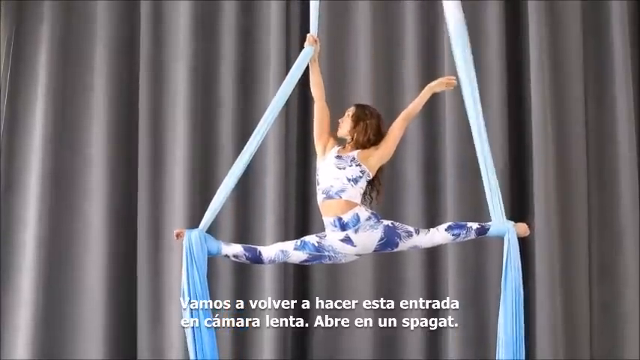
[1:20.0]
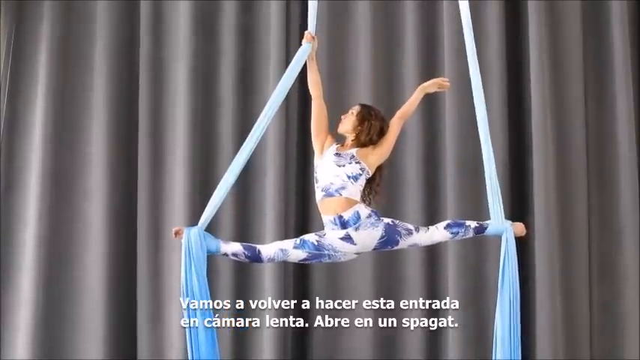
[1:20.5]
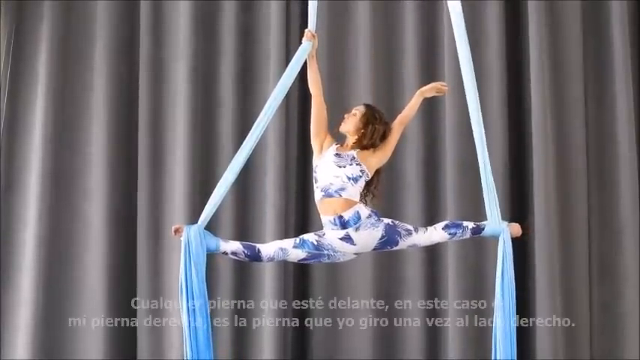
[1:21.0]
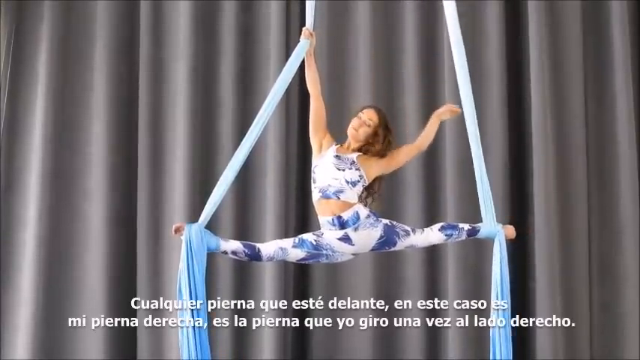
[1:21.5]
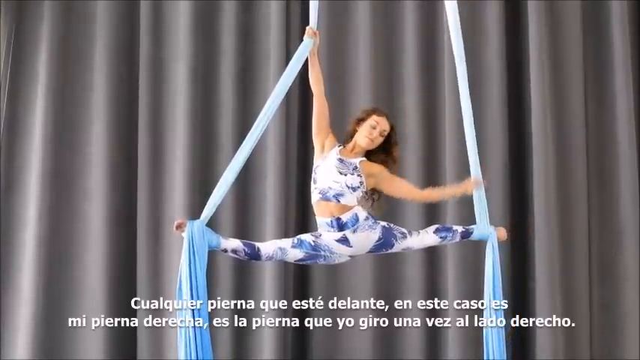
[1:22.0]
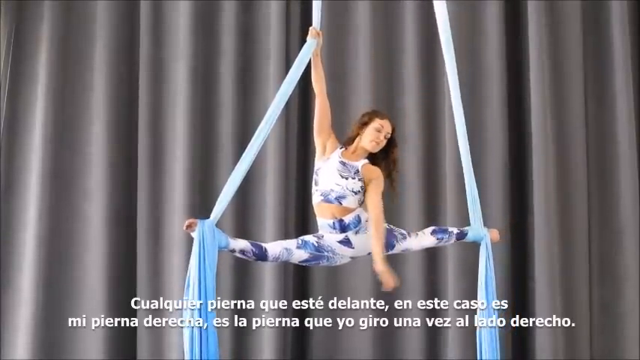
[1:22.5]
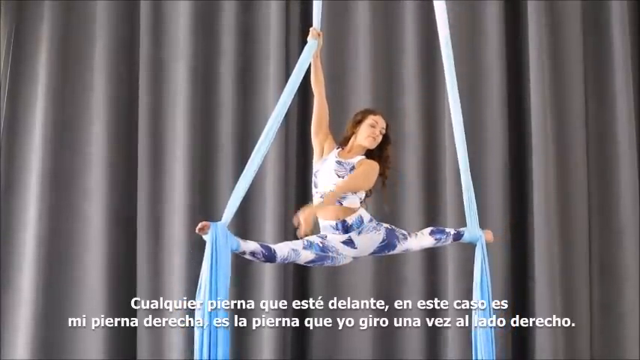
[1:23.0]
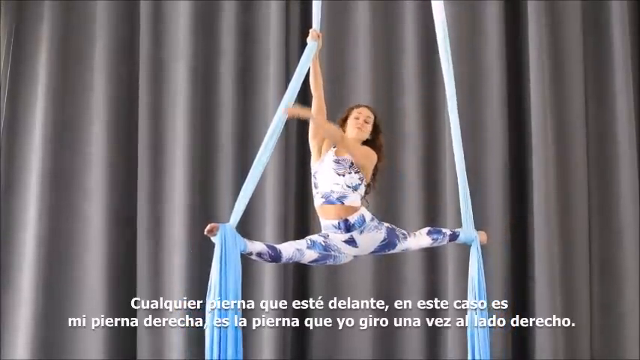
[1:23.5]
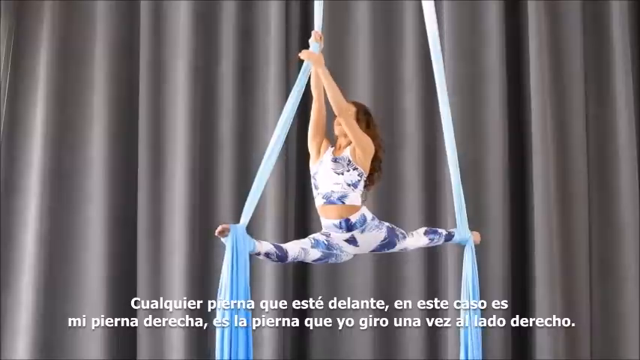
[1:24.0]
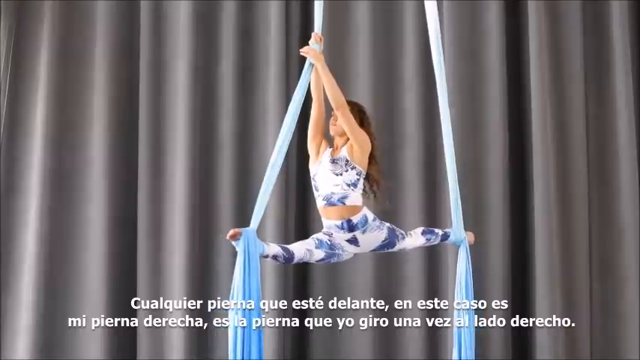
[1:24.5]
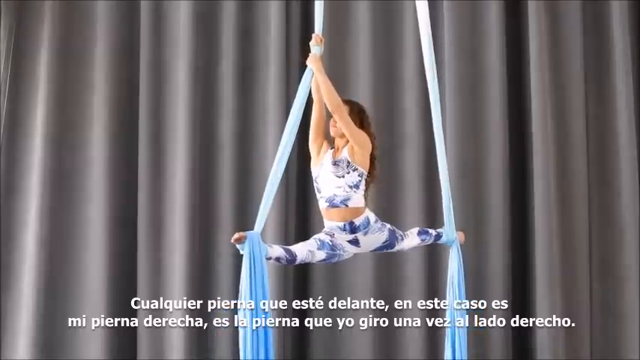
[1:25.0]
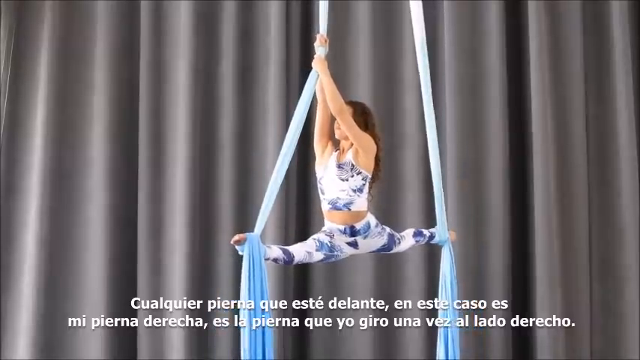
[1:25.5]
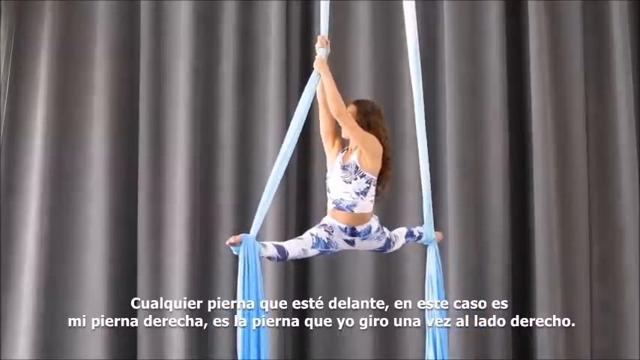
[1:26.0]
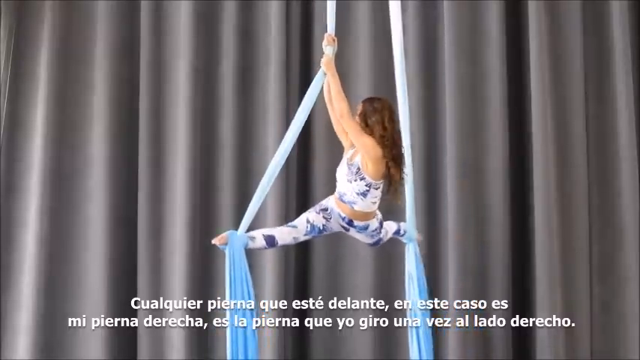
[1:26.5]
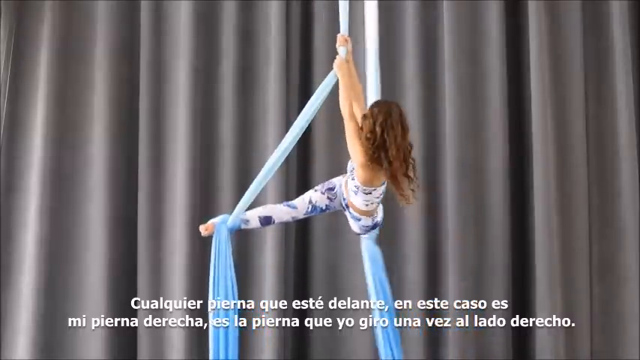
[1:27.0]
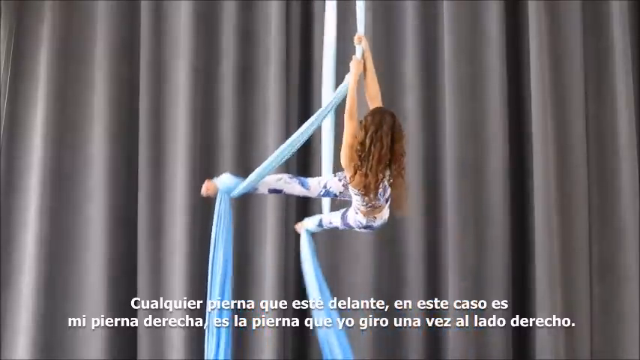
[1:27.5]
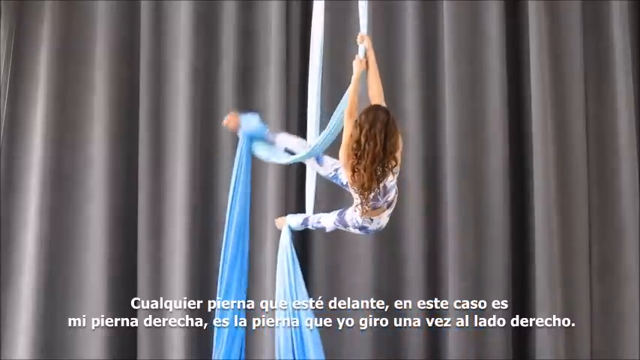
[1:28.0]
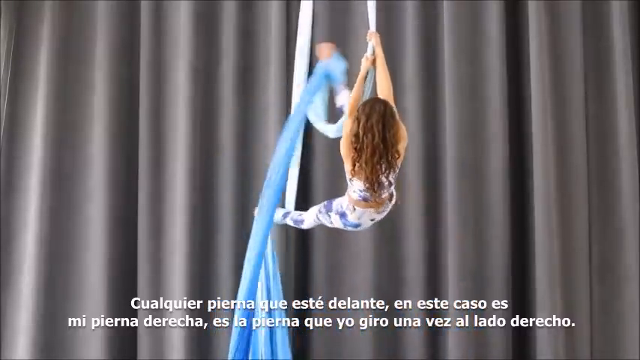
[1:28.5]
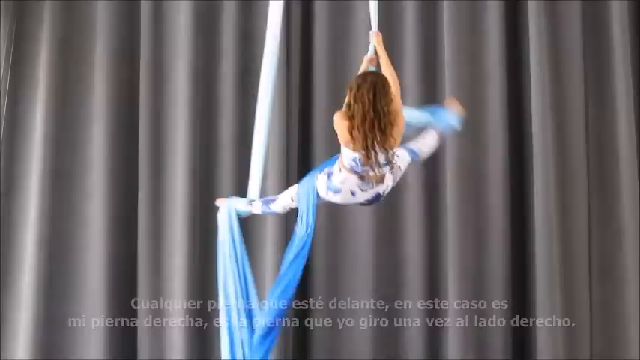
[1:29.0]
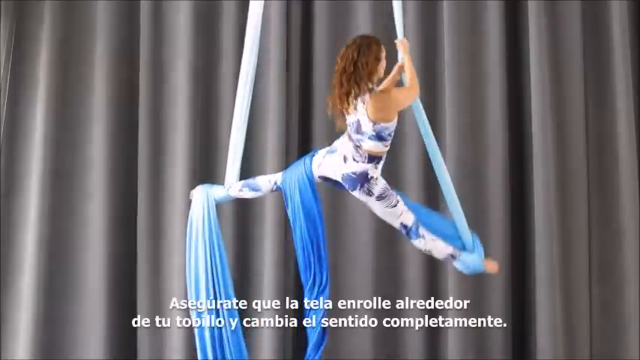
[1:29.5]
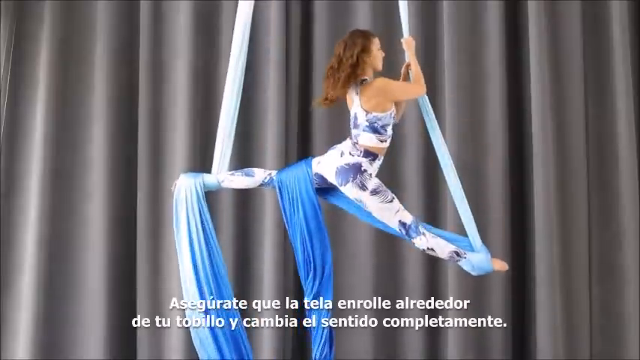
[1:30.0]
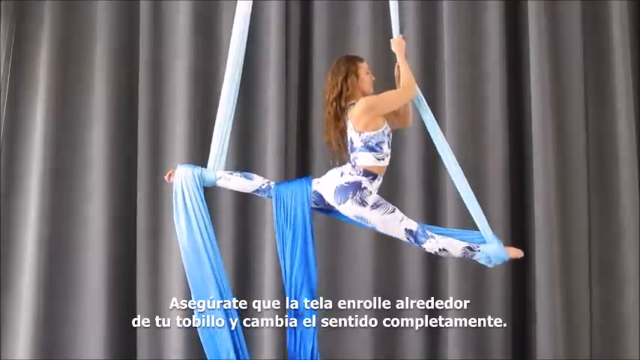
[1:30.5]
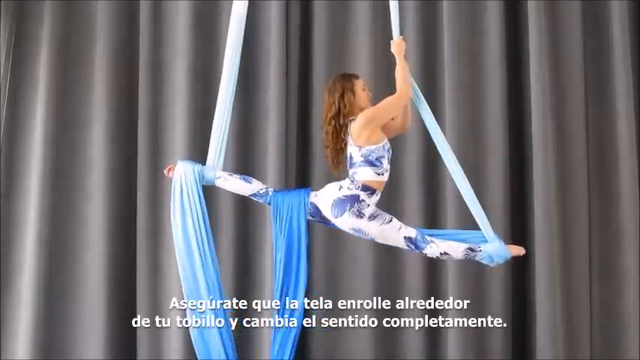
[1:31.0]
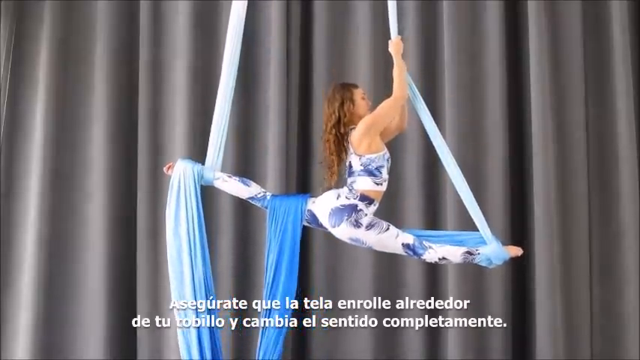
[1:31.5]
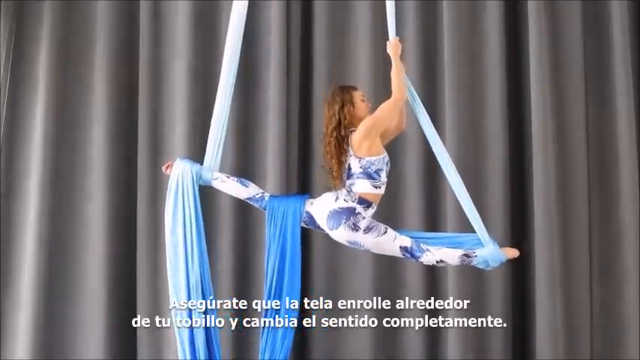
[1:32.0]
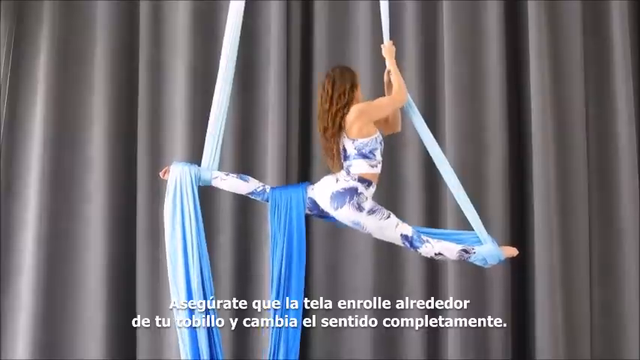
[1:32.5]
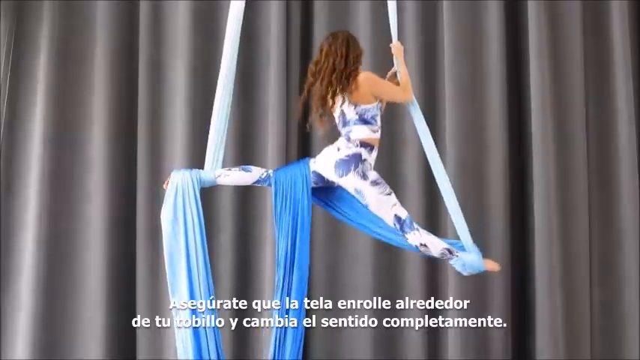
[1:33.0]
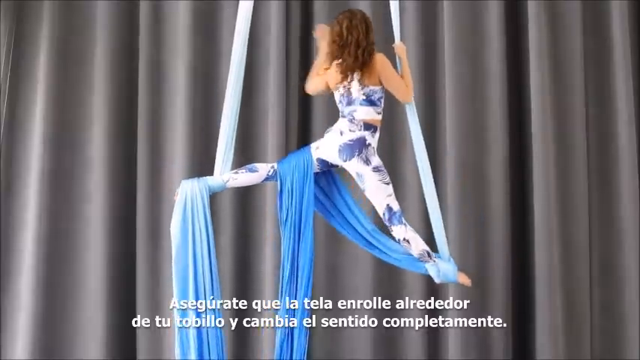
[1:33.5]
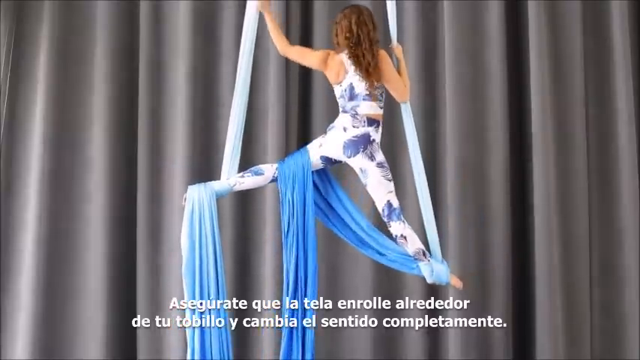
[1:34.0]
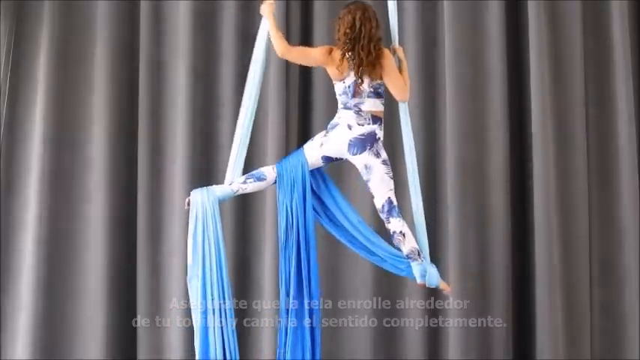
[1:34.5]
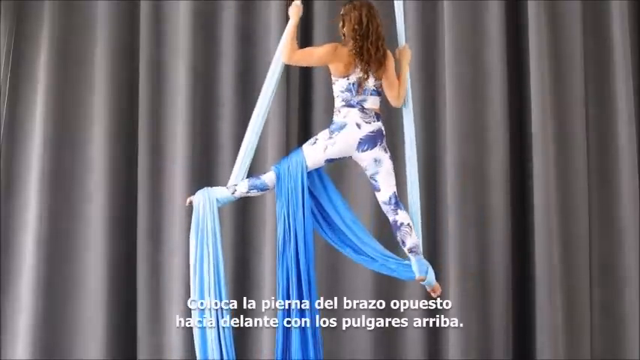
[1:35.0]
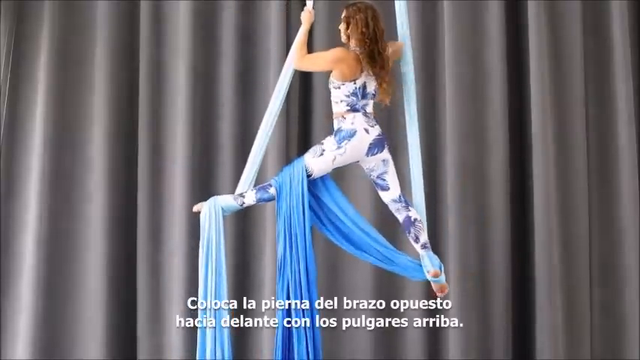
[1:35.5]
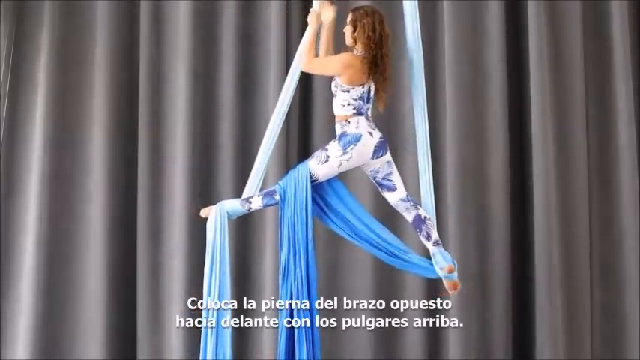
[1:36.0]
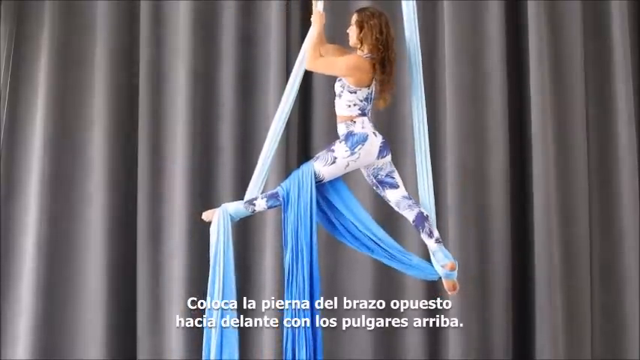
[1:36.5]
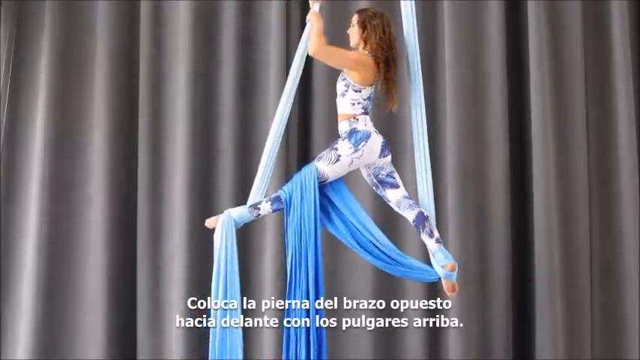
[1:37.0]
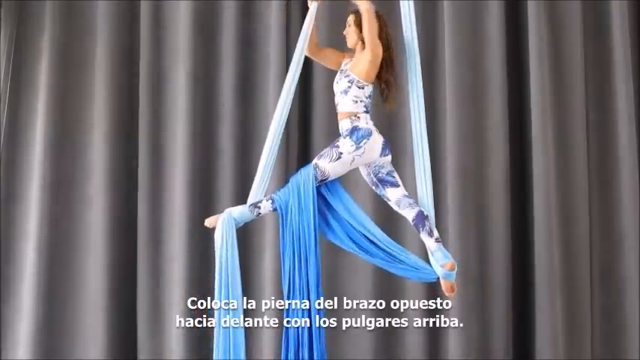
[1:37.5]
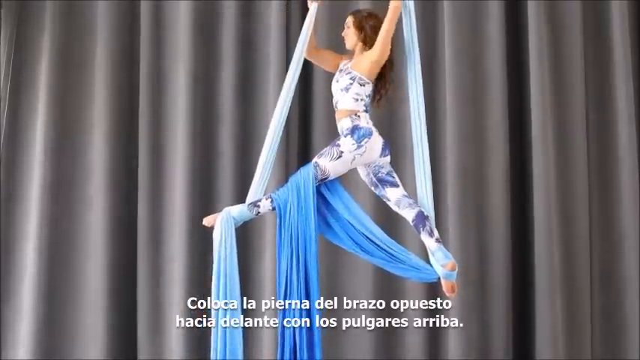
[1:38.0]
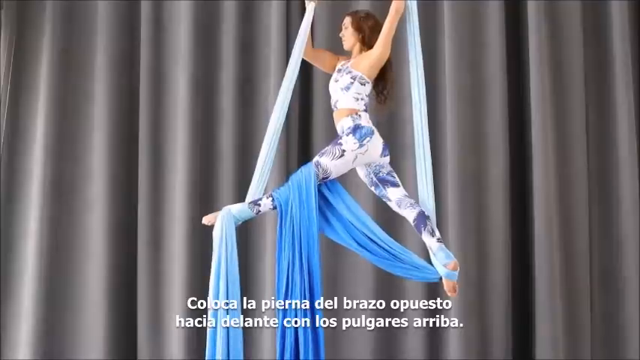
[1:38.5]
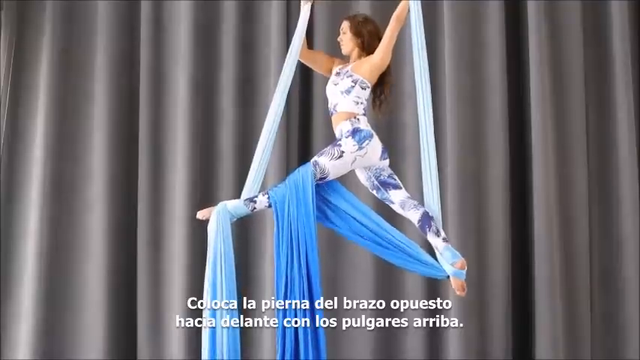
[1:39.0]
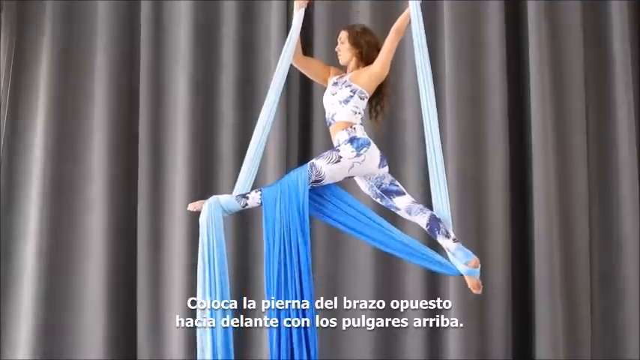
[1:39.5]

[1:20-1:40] A woman doing an aerial dance is stretched way out in the splits in the air. She moves gracefully and slowly, and her legs are held in place by the way she has wrapped them. She slowly twists a leg over, leaving a flap of material on her left leg as she wraps around. Her long arms reach up to grab the material. Behind her is a thick gray curtain.